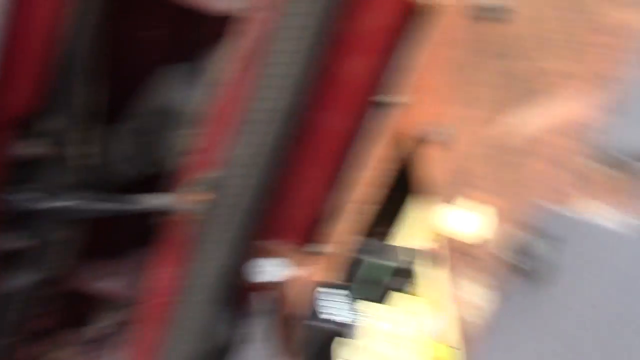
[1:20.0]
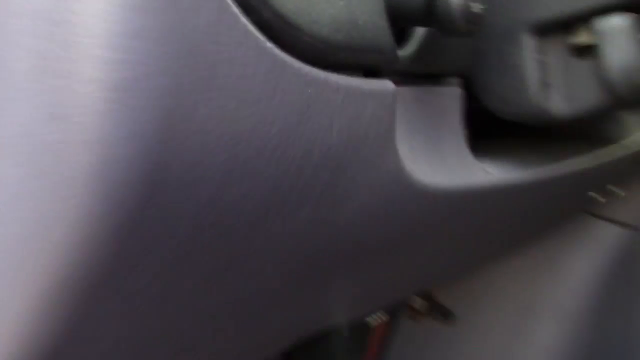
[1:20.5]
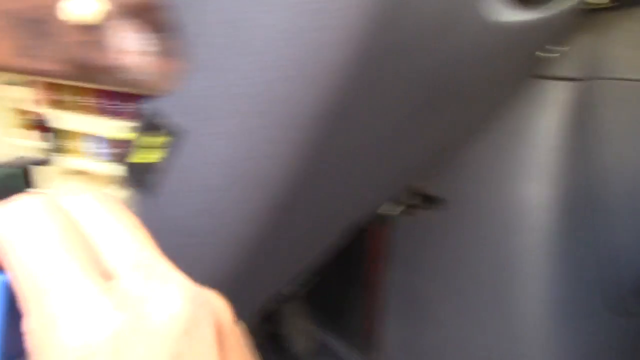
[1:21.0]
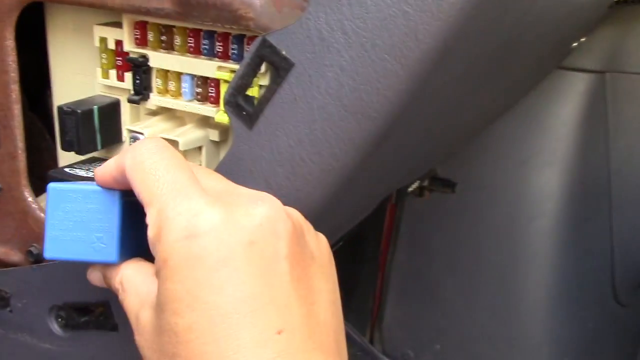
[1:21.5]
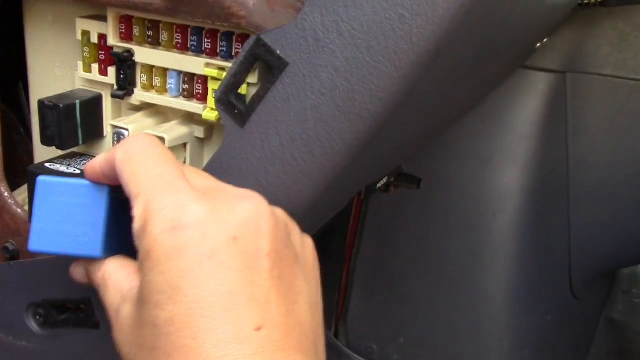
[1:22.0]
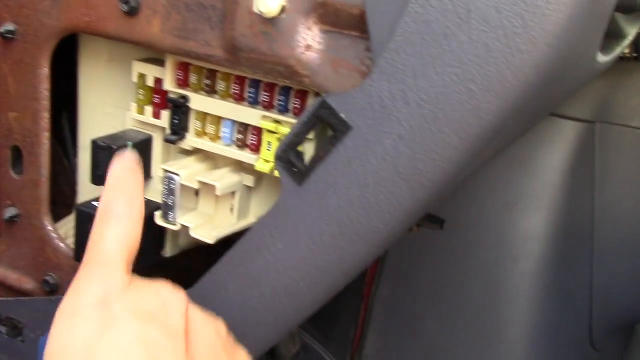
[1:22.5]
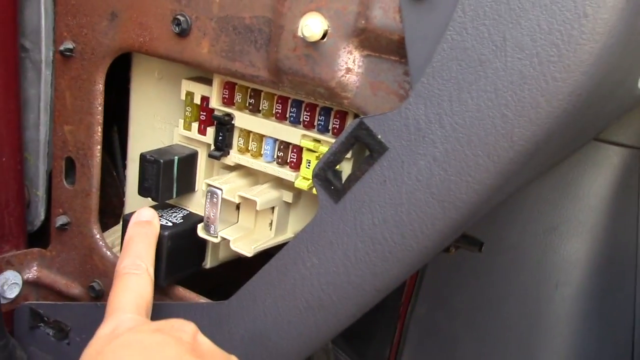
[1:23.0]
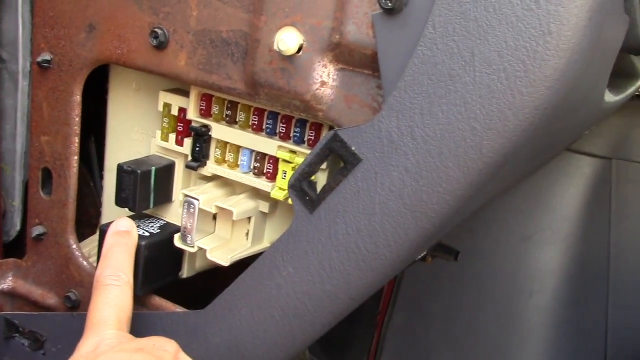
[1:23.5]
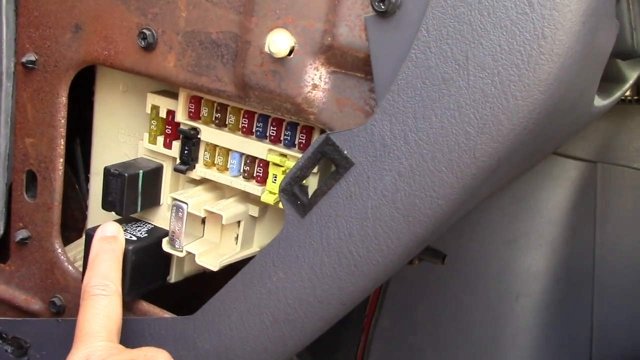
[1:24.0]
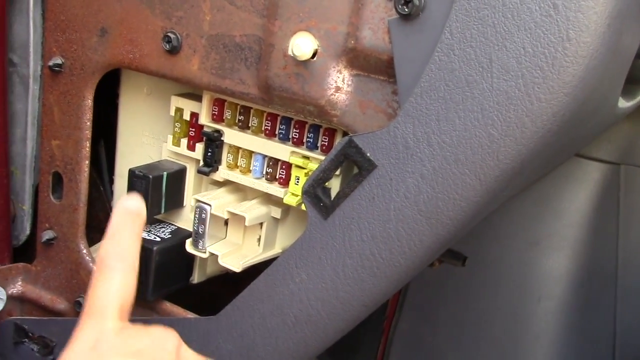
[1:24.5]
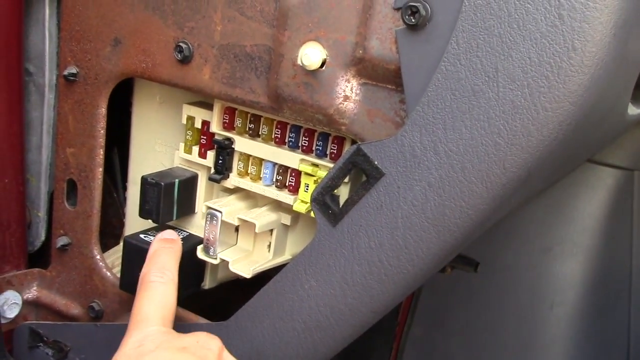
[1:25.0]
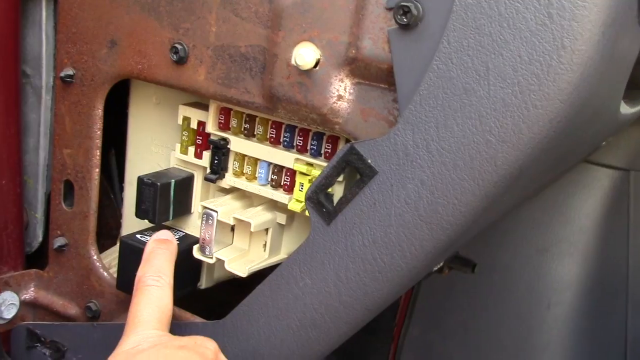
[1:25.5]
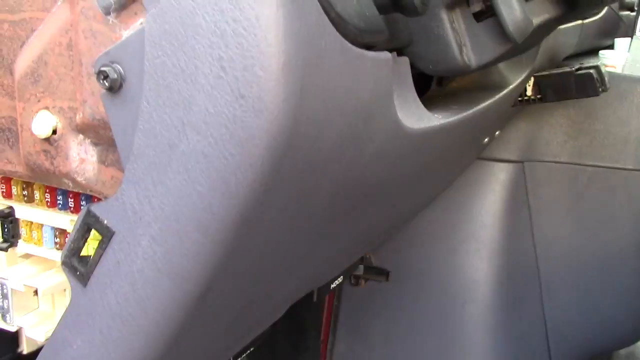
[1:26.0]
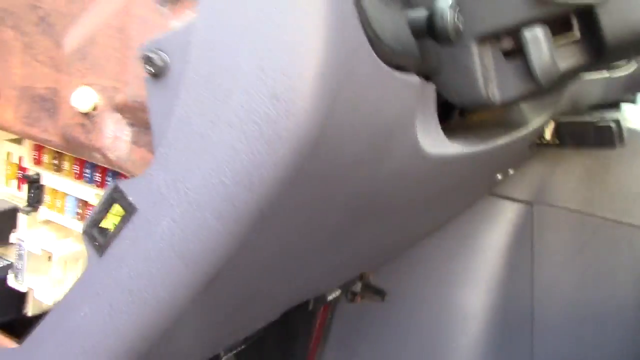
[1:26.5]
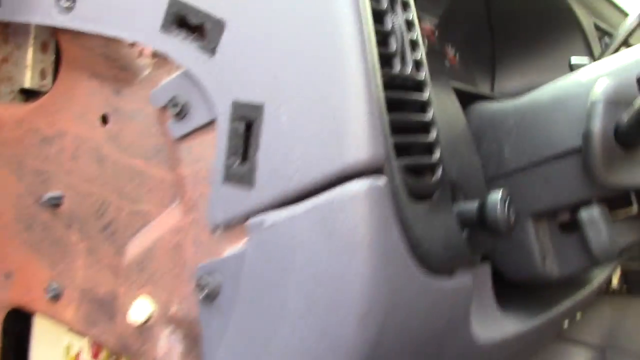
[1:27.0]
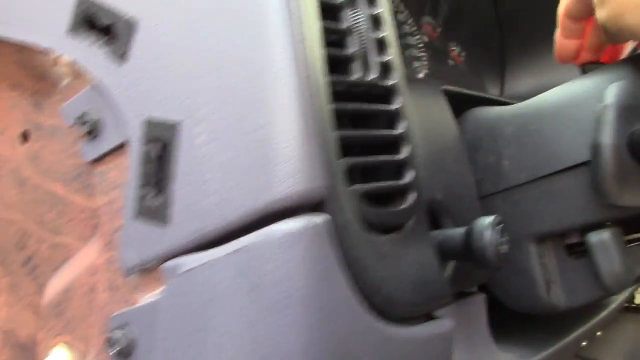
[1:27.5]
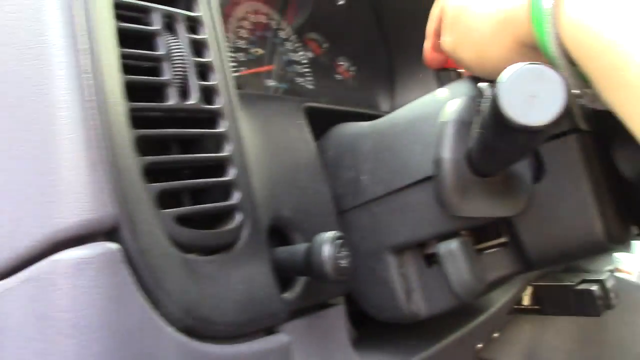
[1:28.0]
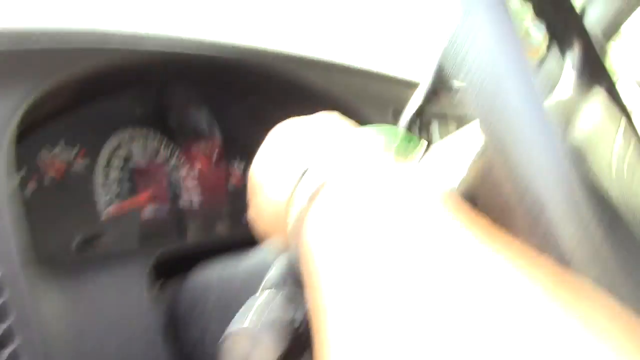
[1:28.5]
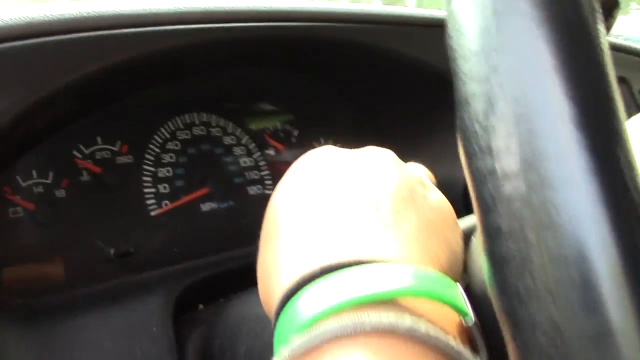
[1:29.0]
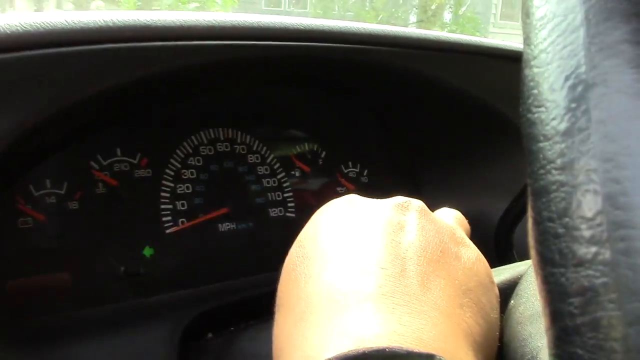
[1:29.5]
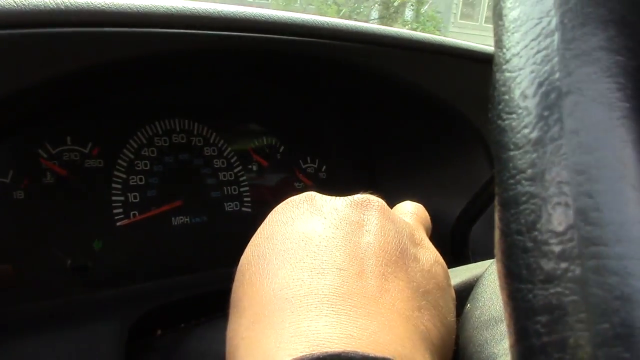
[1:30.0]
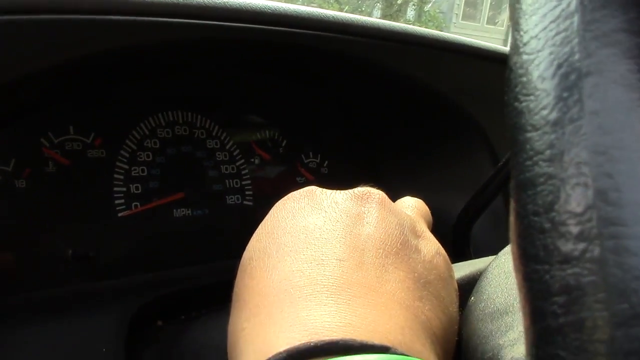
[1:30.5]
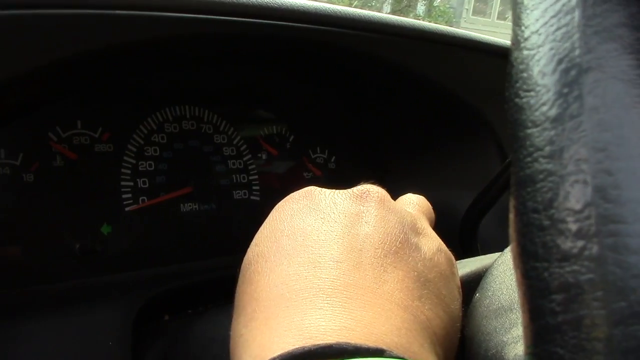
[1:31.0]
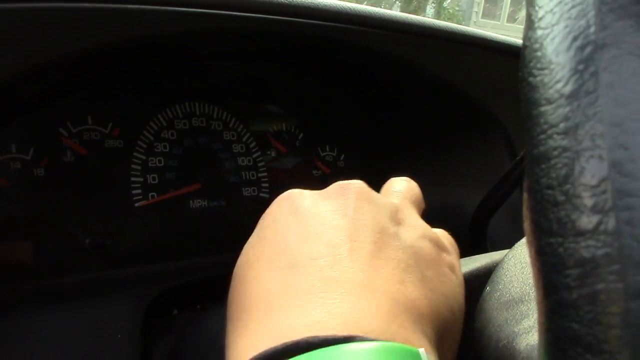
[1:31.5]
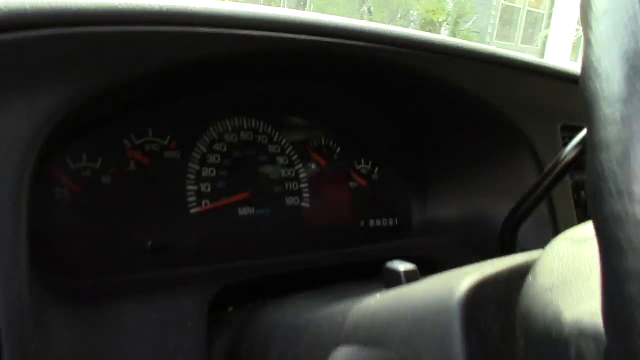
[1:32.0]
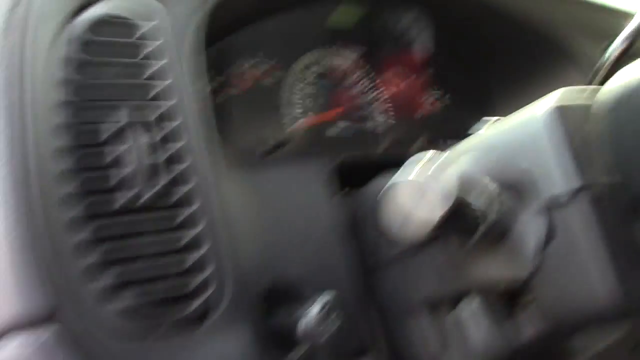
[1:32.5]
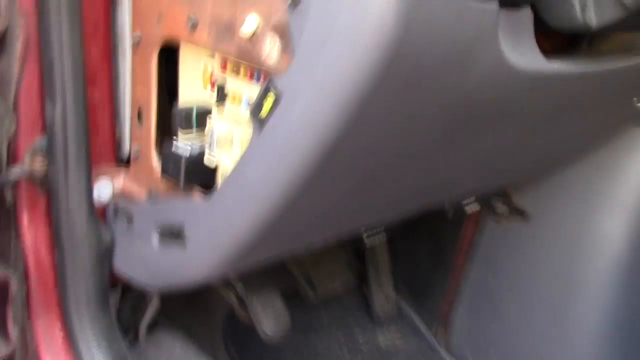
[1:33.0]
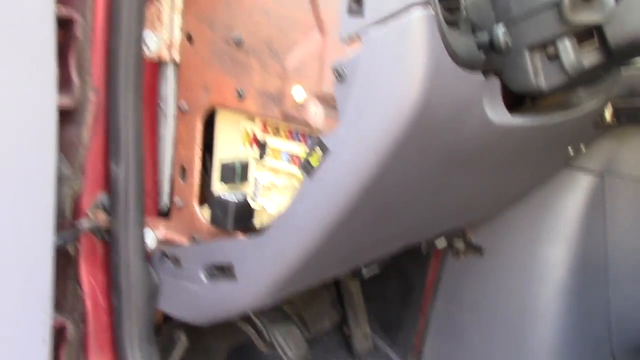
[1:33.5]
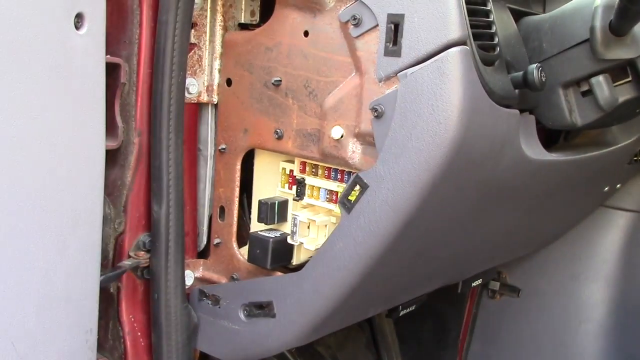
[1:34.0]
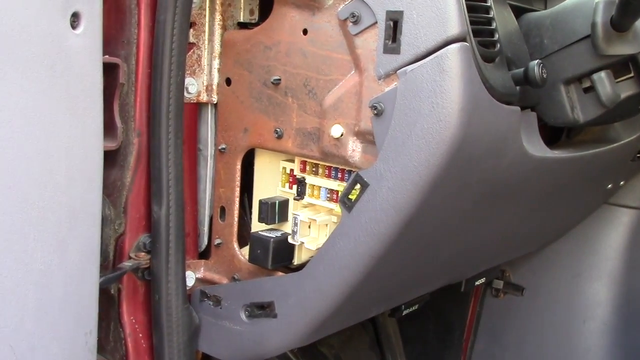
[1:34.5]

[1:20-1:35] At the inside panel on the side of the dashboard facing the door, the right hand of the camera person, probably the woman, holds a blue box and points at the black box on the side panel, tapping it a few times. The view then cuts back to the dashboard, seen from the side rather than straight on. She pushes down a button on top of the wheel, and the left turn signal flashes on and off on the dashboard; these are probably the hazard lights, though her hand blocks whether the right signal also flashes. She leaves them on for a few moments, turns them off, and brings the camera back down to the panel.